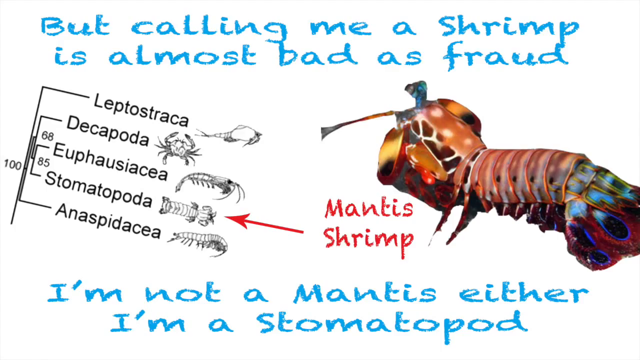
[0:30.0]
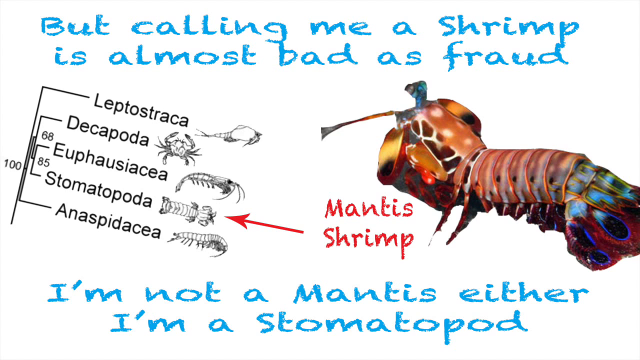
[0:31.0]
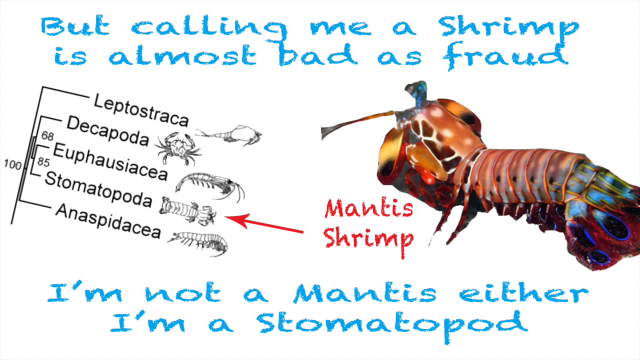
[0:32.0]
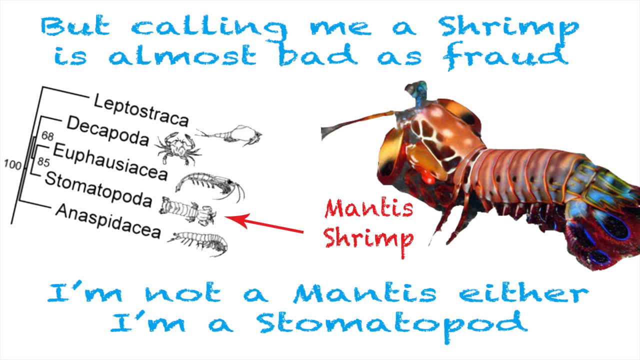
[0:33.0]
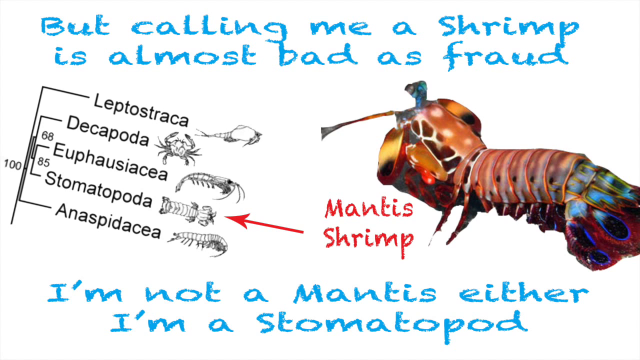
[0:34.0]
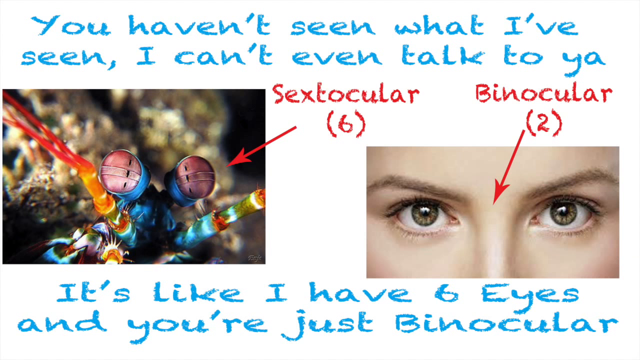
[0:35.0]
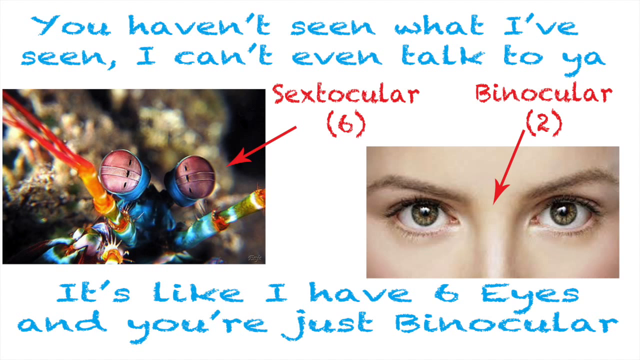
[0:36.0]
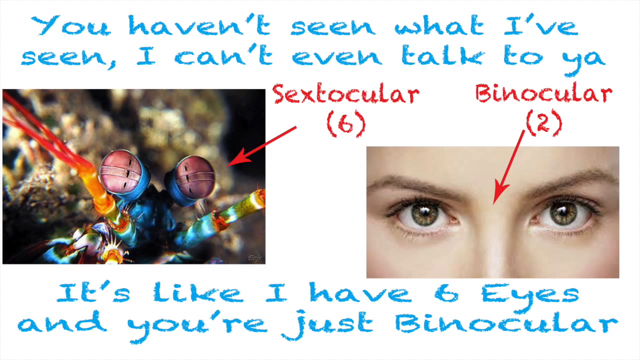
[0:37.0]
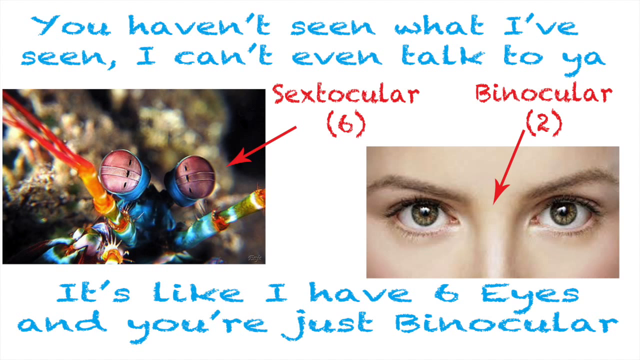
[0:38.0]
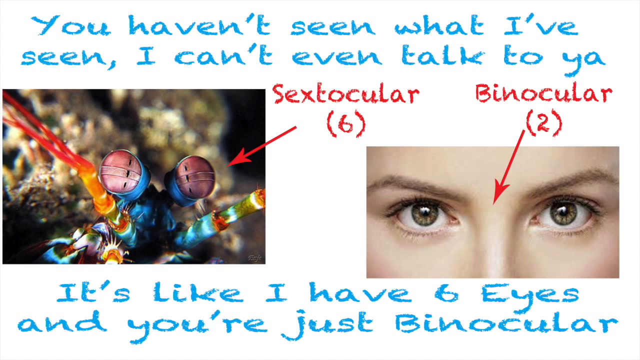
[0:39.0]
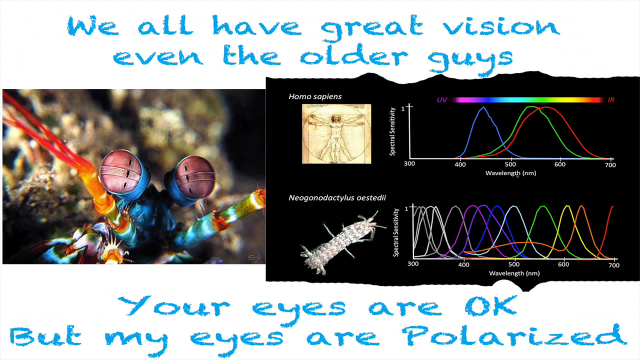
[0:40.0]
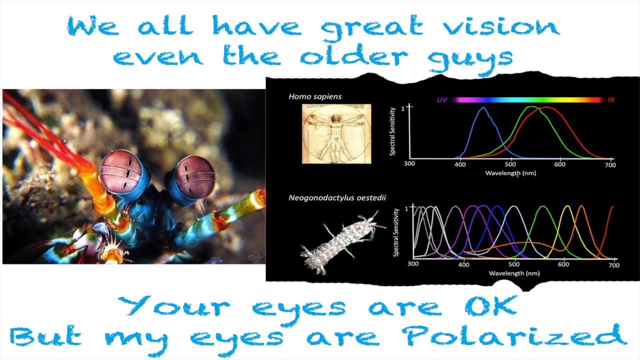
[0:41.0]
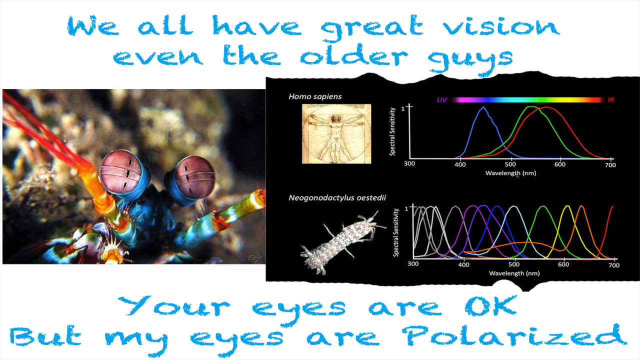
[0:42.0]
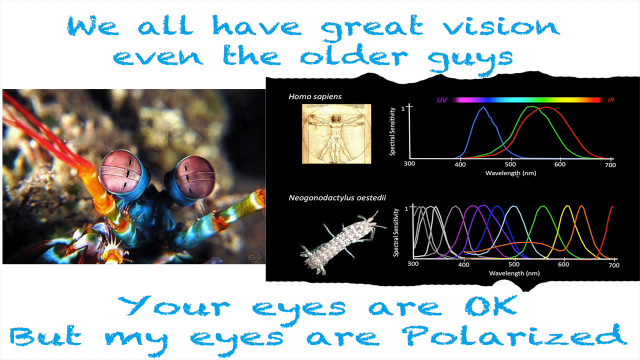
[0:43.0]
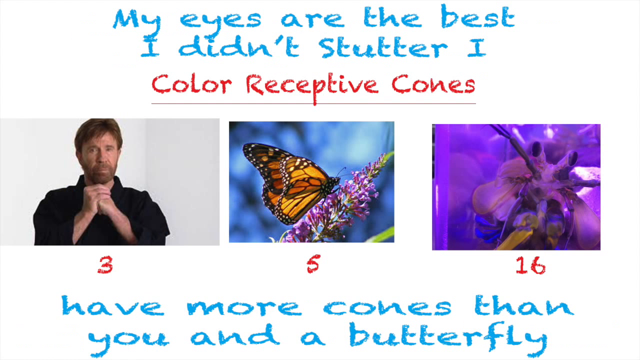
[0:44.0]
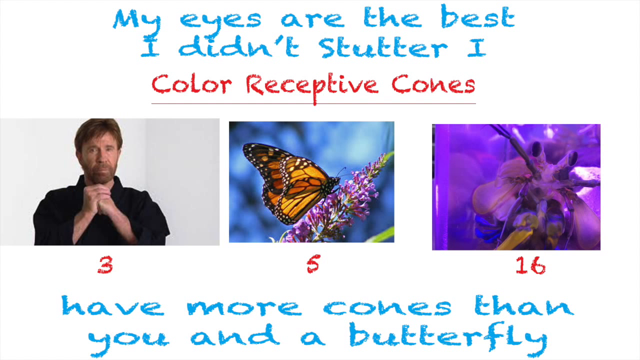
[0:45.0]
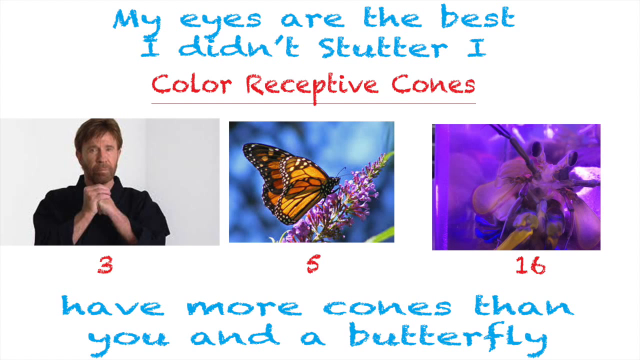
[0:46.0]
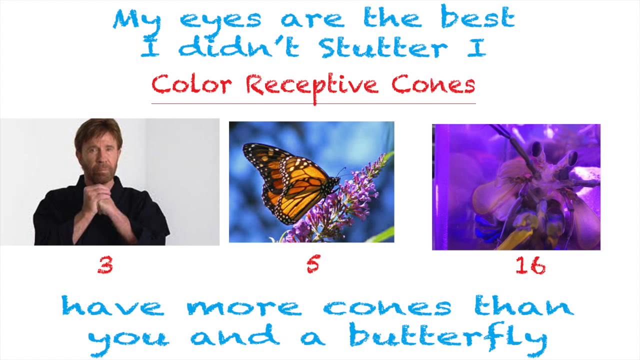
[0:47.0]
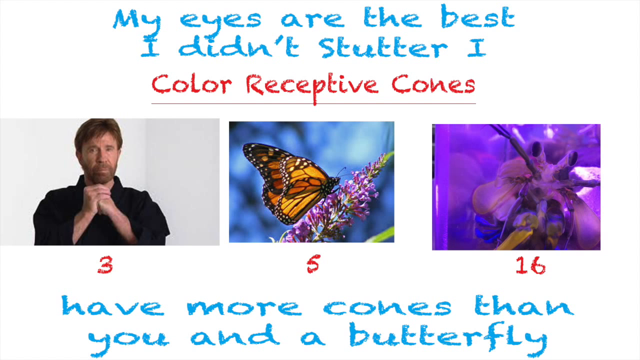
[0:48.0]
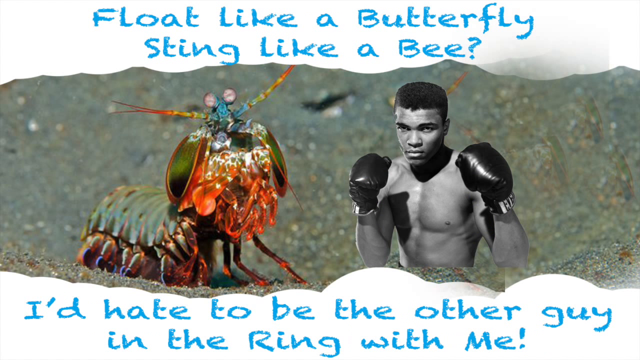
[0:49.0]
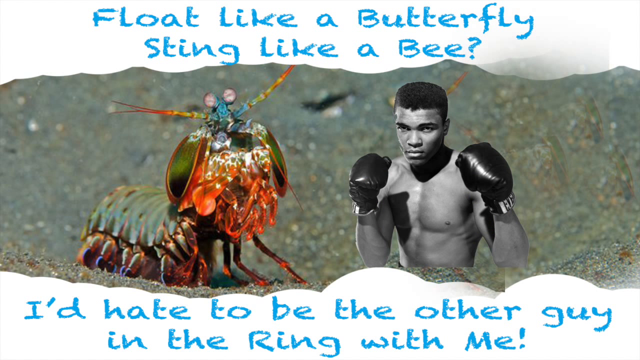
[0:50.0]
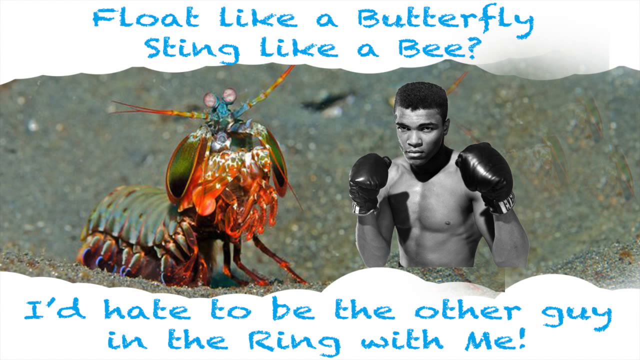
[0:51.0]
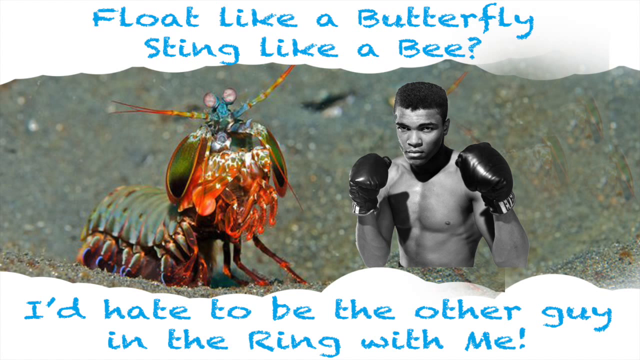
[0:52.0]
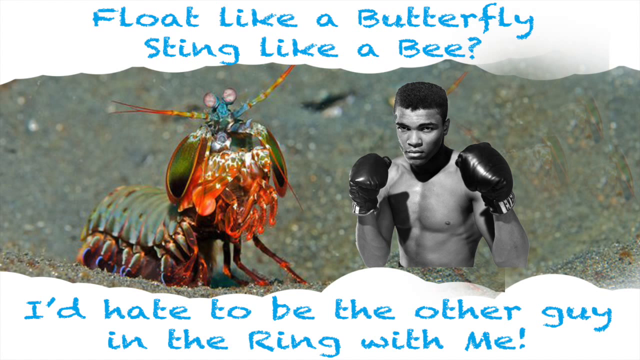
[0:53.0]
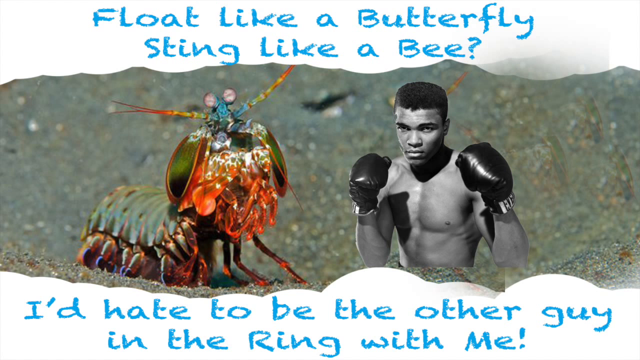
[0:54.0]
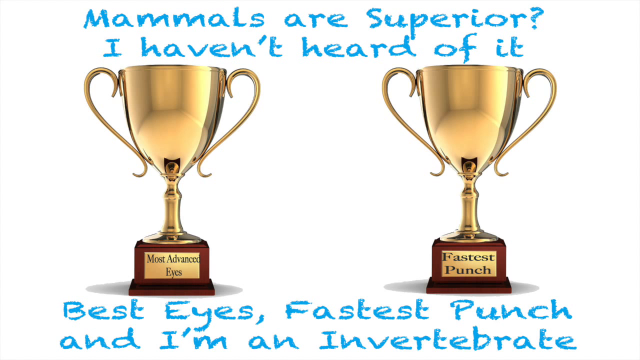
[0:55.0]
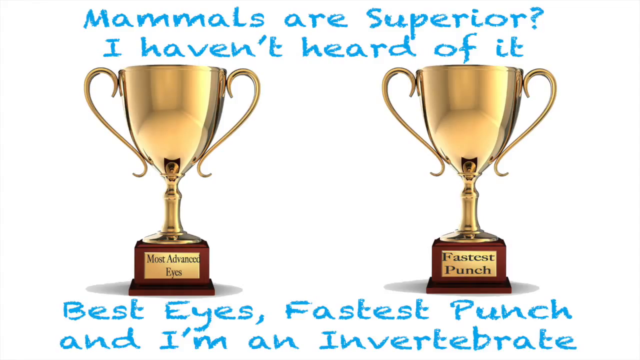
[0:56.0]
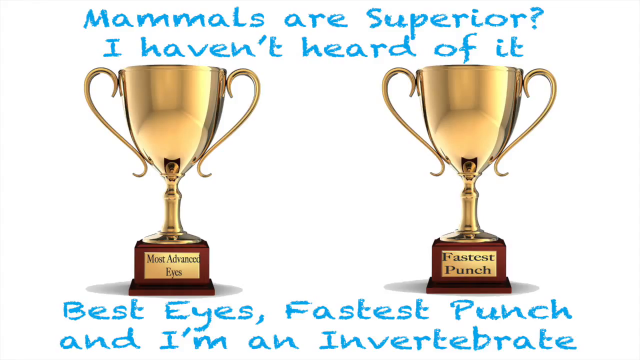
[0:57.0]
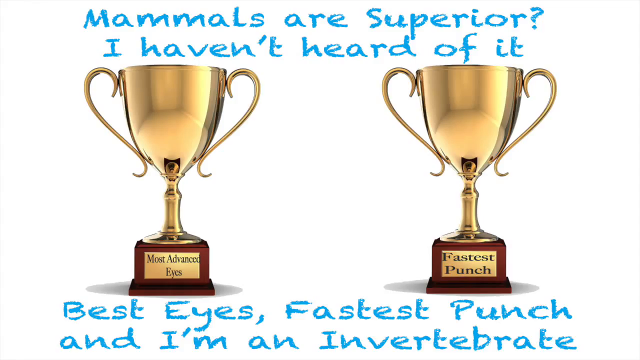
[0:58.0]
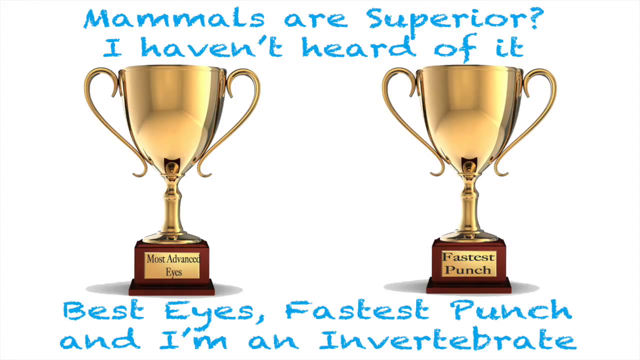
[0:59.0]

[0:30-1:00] The image showing the different types and shapes is followed by an image of two things, labelled sextocular and binocular, with text above reading "you haven't seen what I've seen. I can't even talk to you. It's like I have six eyes and you are just binocular." Next comes an image of sound waves or vision waves going up and down in different colour shades, with the text above "we all have great vision even the older guys your eyes are okay." Another image contains three pictures: one for a man, one for a butterfly, and a third that is unidentified, under the heading "colour receptive cones"; the text on top reads "yeah my eyes are the best. I didn't shutter. I have more cones than you and a butterfly." The next image shows a mantis shrimp and, next to it, a boxer posing as if ready for a fight, with "float like a butterfly, sting like a bee" above and "I would hate to be other guy" below. Then two trophies appear, with text above reading "mammals are superior? I haven't heard of it." and "best eyes fastest punch".